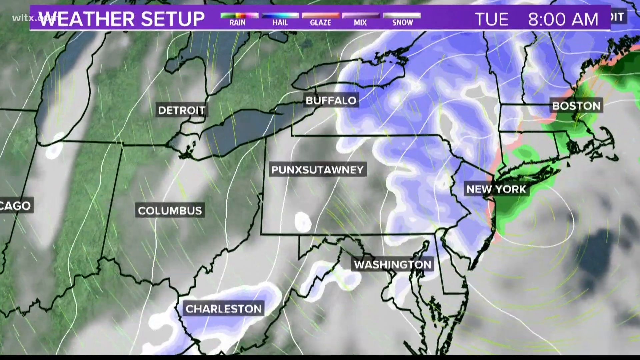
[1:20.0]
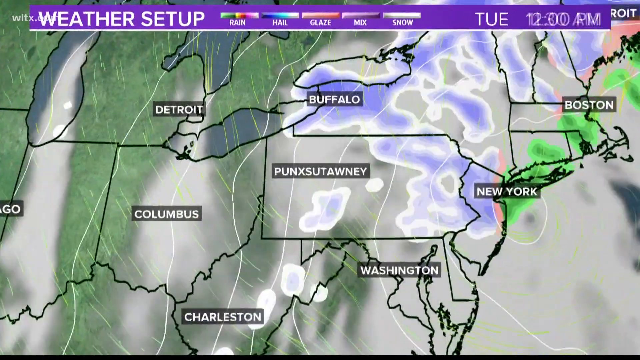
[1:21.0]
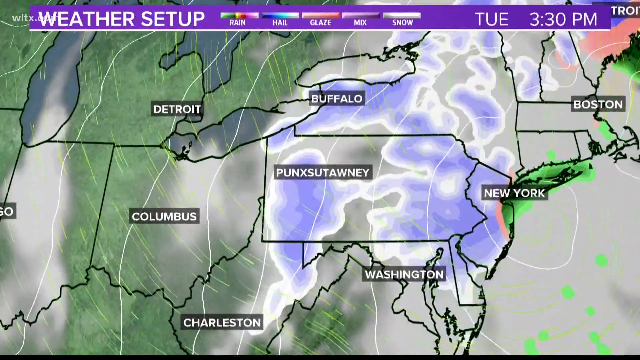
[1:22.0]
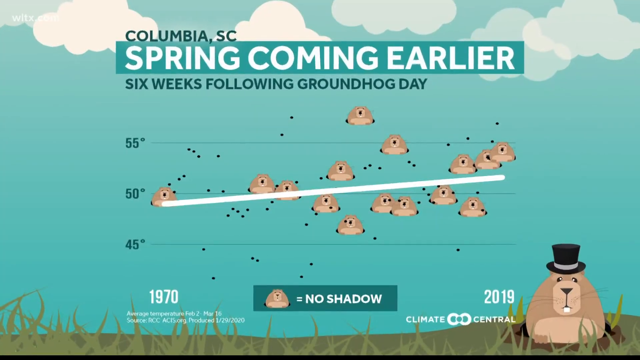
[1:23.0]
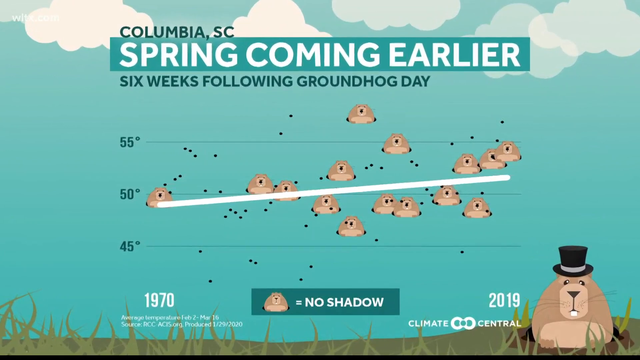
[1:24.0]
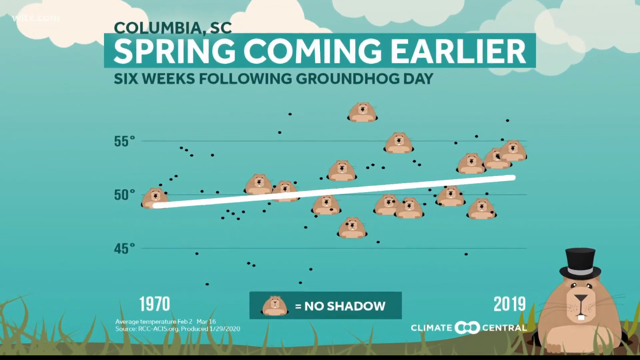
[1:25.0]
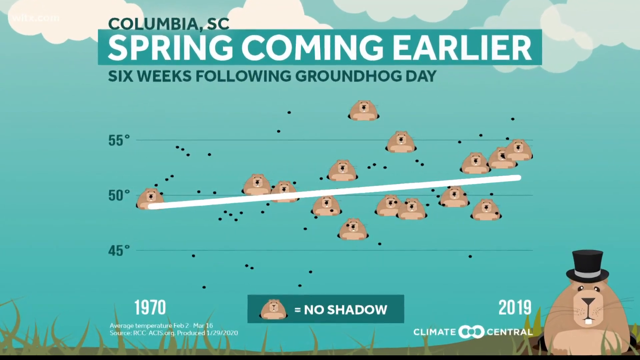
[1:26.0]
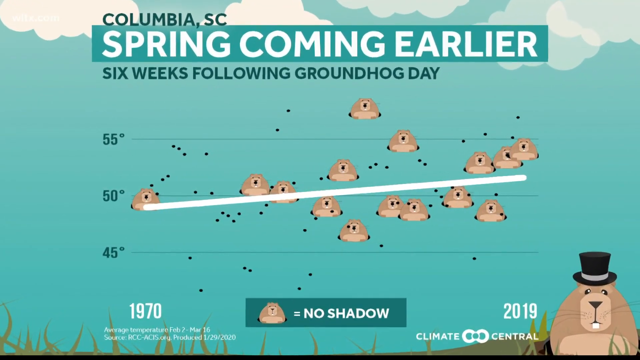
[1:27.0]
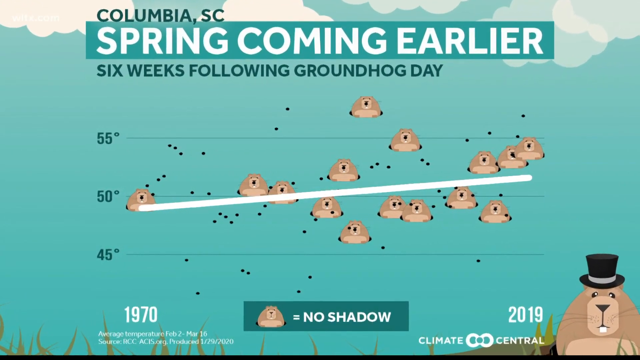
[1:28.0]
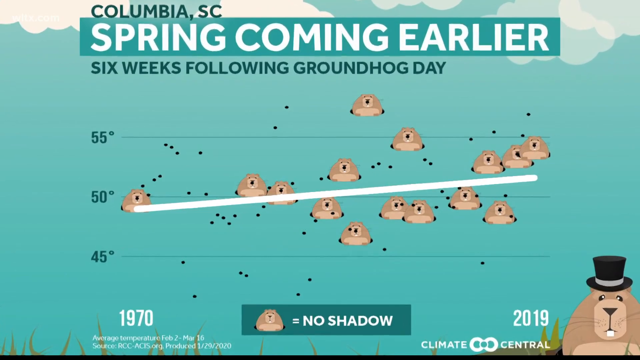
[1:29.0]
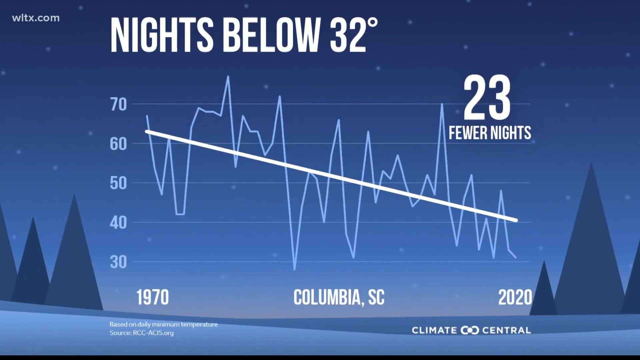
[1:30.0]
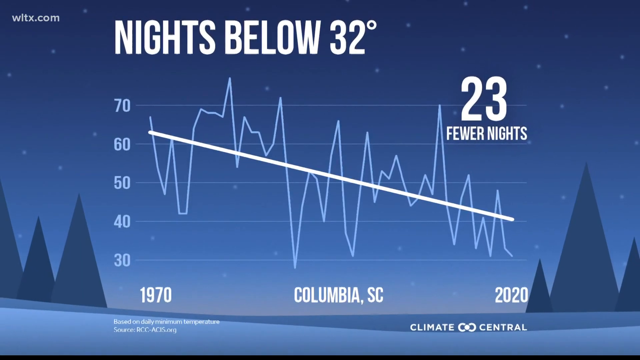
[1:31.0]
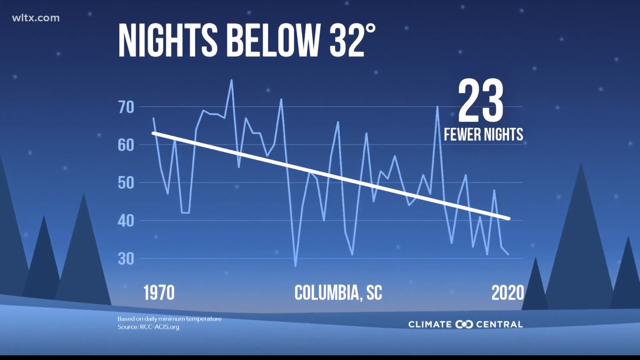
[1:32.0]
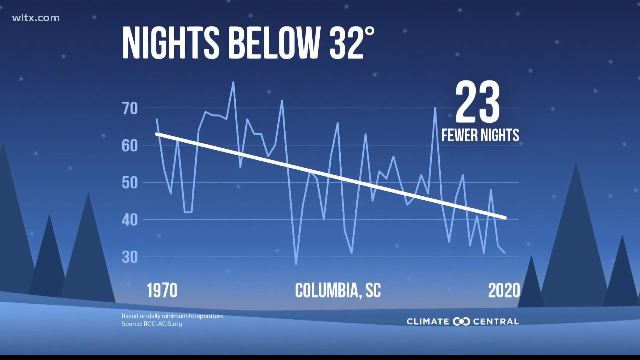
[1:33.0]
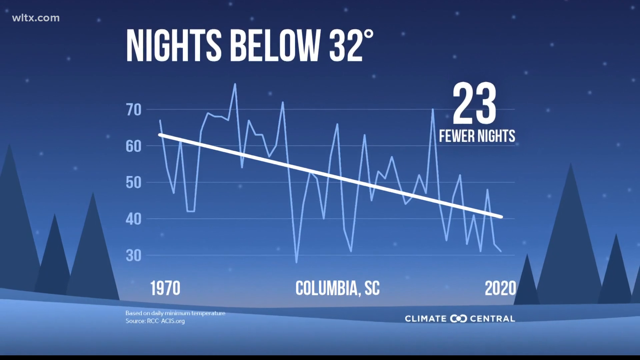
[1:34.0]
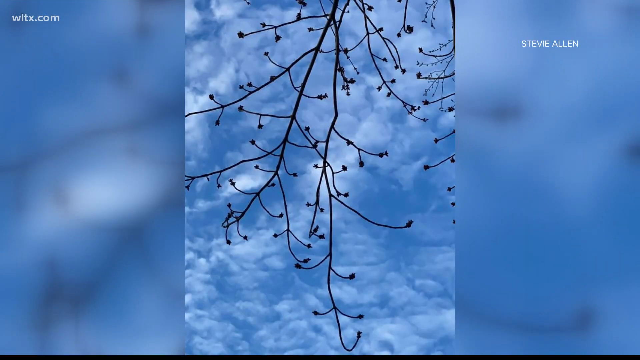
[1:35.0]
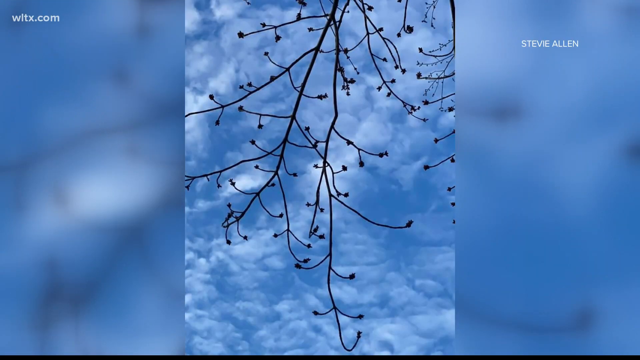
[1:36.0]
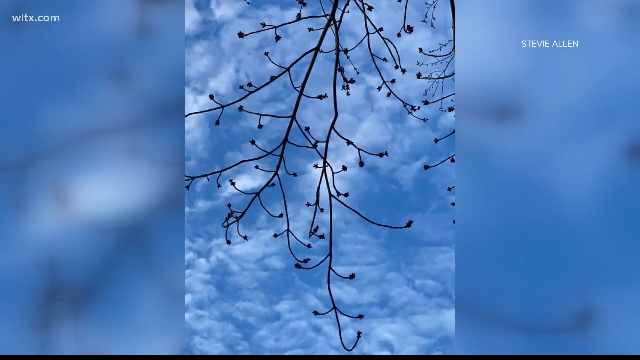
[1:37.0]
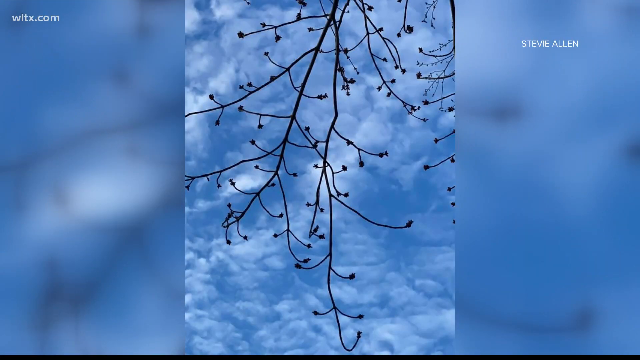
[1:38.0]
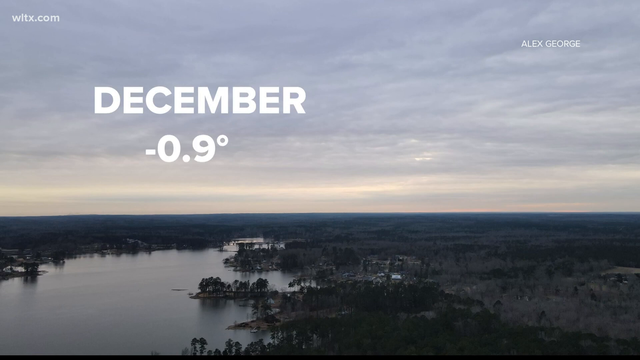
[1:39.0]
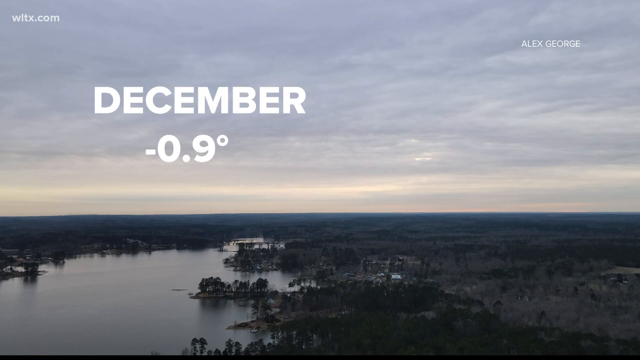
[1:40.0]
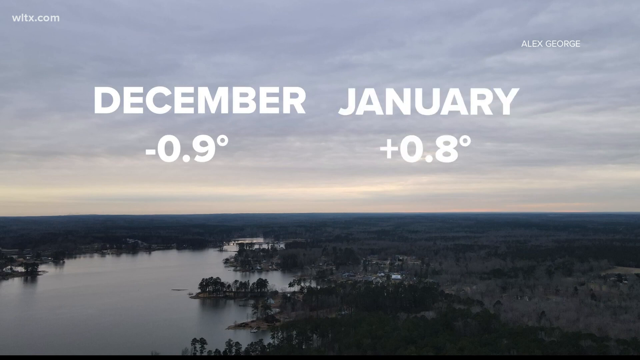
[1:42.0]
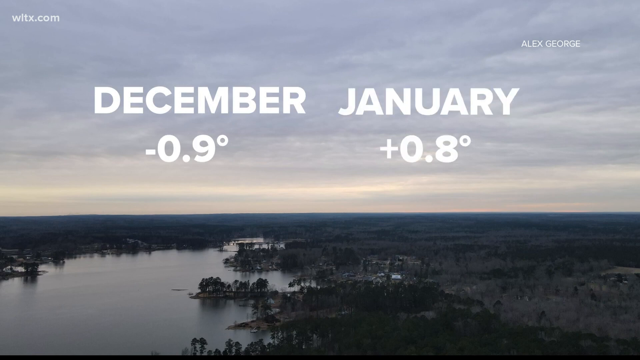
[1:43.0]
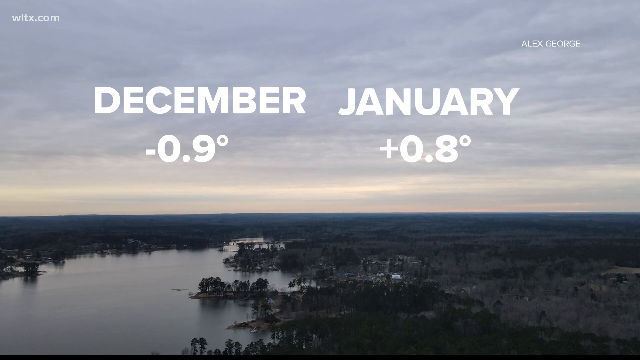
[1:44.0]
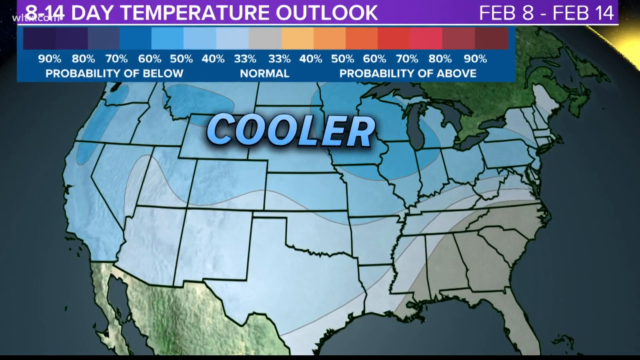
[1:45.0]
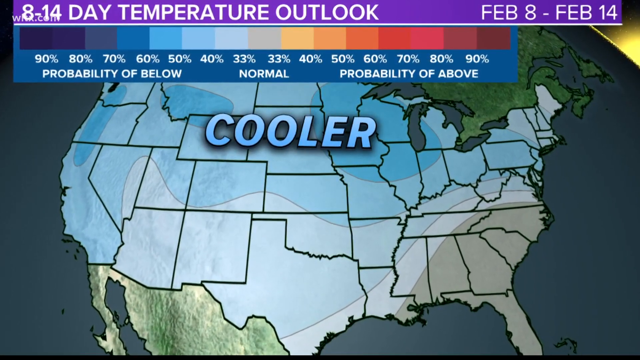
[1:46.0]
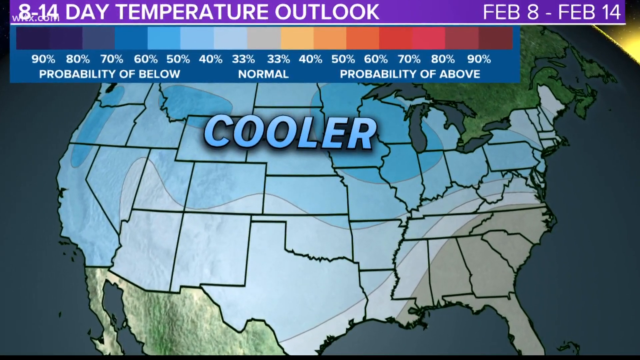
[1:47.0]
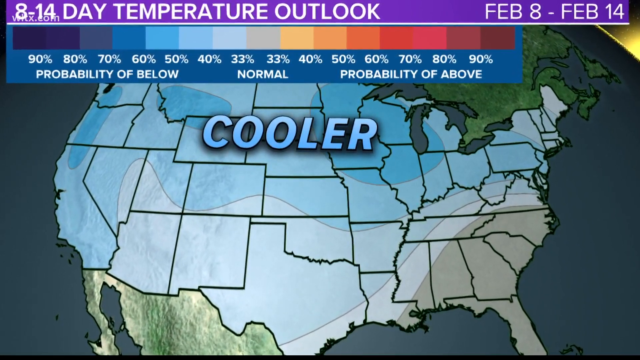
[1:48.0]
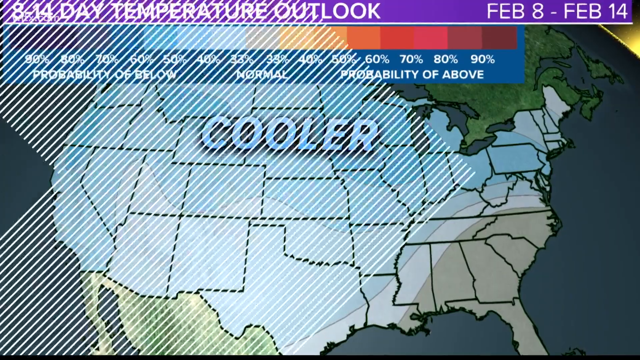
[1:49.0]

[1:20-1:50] A weather map runs as a time lapse showing the storm or weather moving, starting on Tuesday and advancing roughly every 30 minutes. The video then moves to a segment for Columbia, South Carolina, about whether spring comes early in the six weeks following Groundhog Day, with a little graph featuring a groundhog that shows some trends. Another graph reads "nights below 32 degrees" and spans 1970 to 2020; its line goes up and down repeatedly. Trees with some sprouts on them are shown, along with a sky that has scattered clouds but is mainly blue. Then an overview of what looks like a river appears with text reading "December is negative 0.9 degrees." Finally an 8 to 14 day temperature outlook is shown.